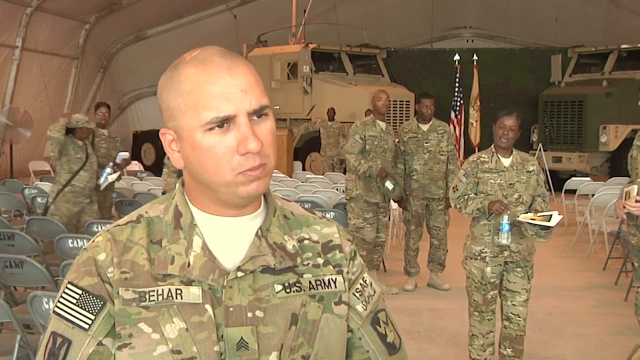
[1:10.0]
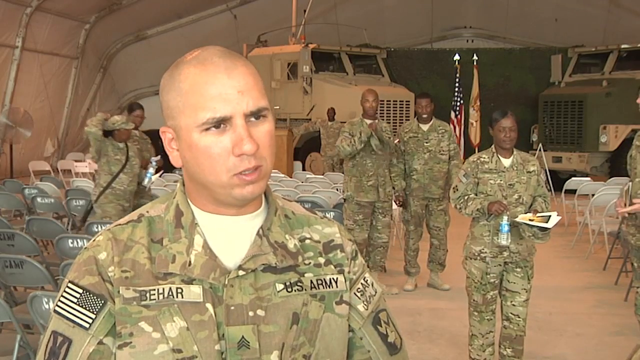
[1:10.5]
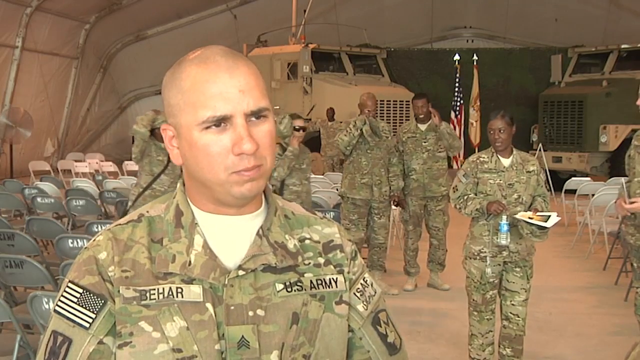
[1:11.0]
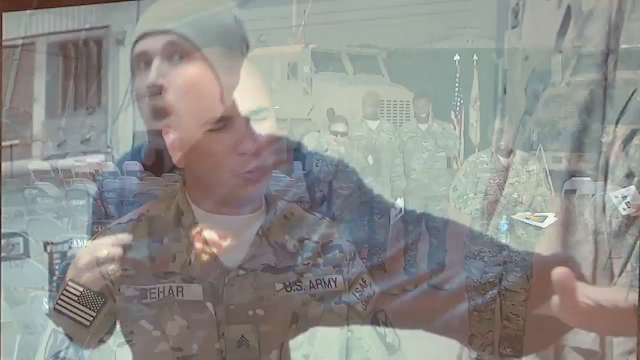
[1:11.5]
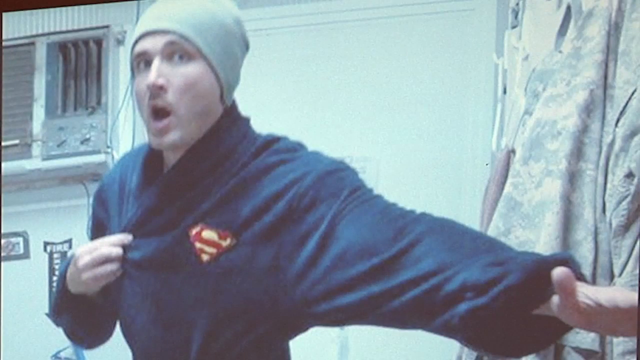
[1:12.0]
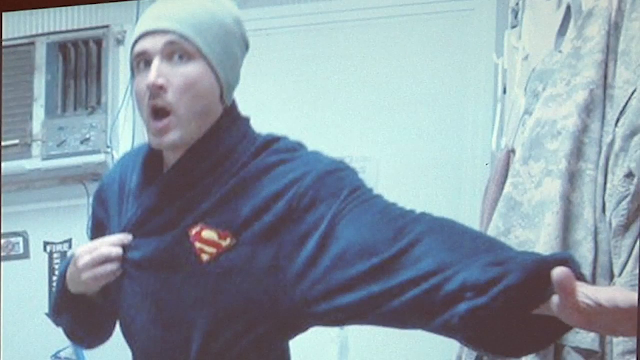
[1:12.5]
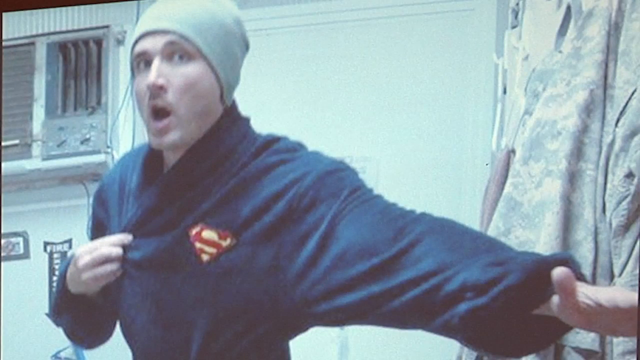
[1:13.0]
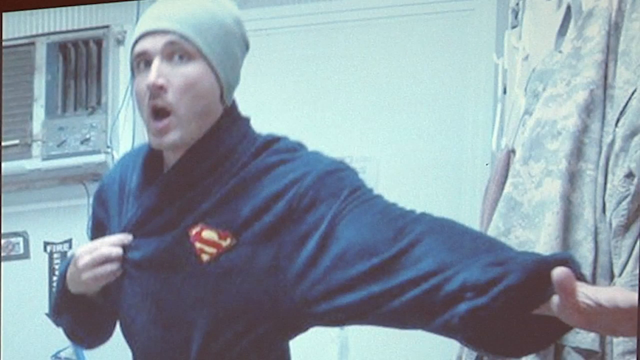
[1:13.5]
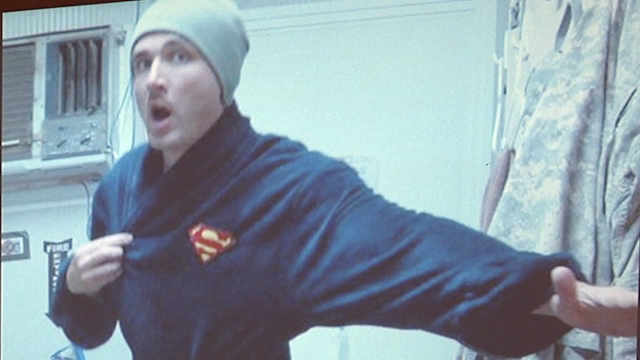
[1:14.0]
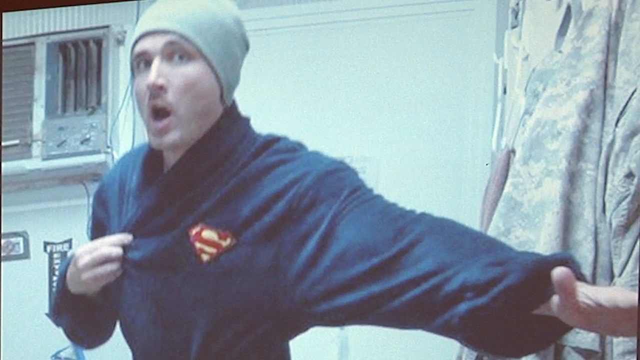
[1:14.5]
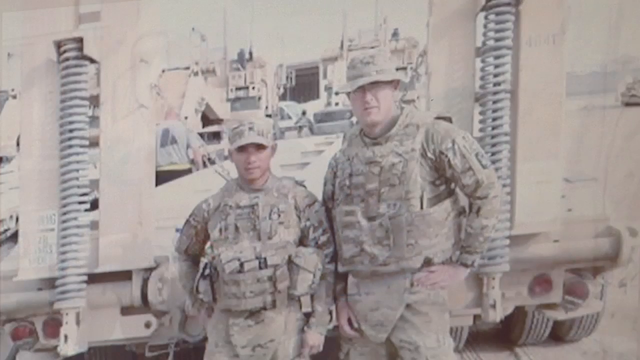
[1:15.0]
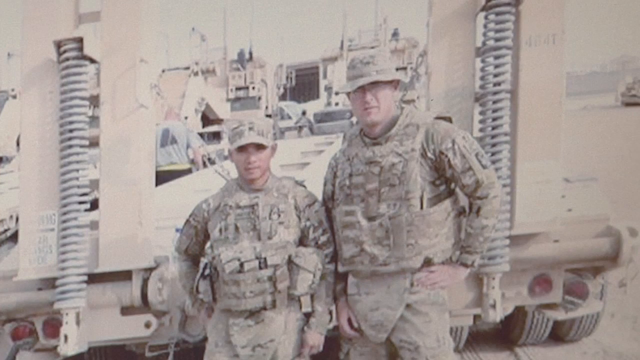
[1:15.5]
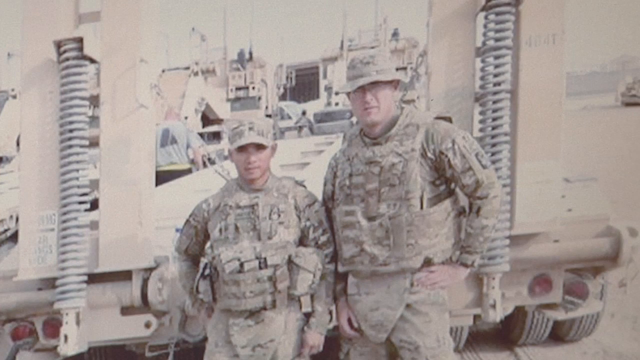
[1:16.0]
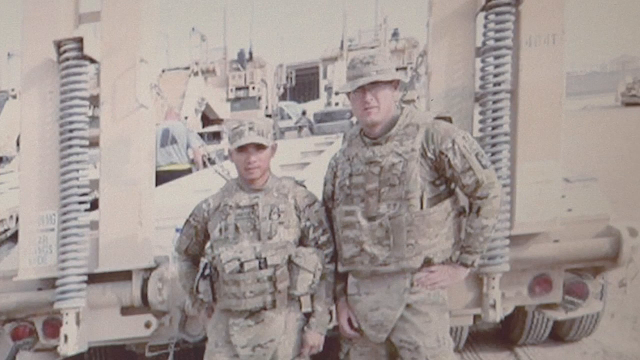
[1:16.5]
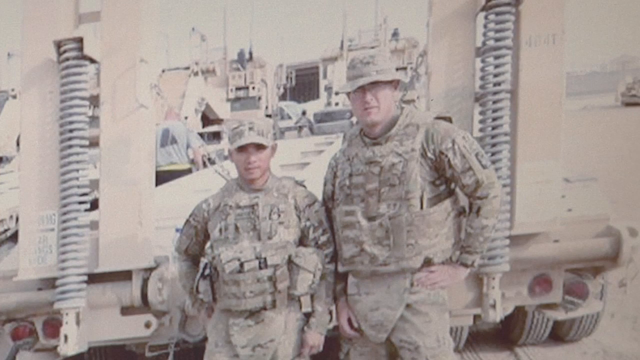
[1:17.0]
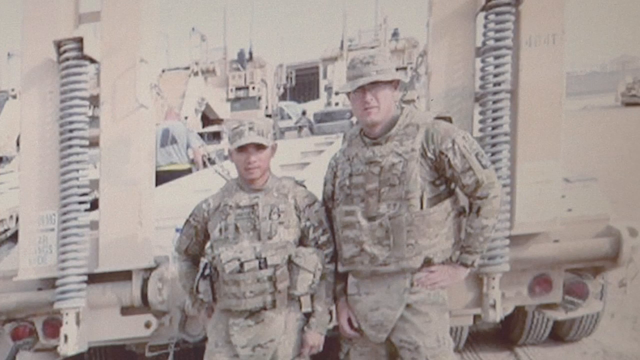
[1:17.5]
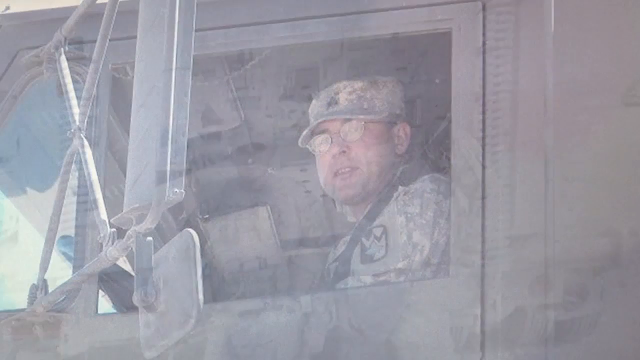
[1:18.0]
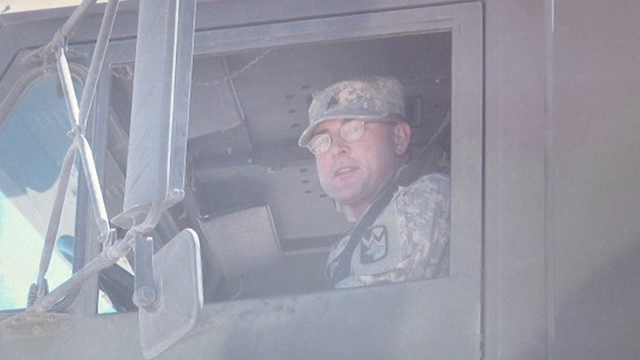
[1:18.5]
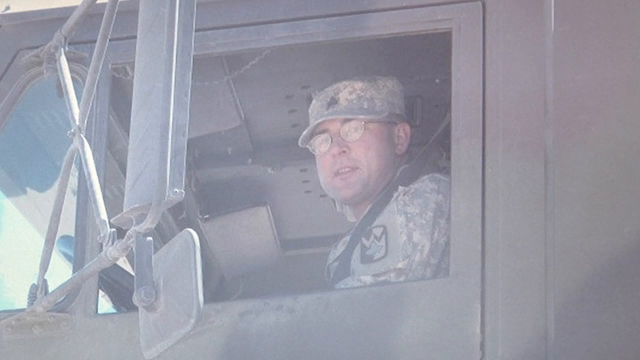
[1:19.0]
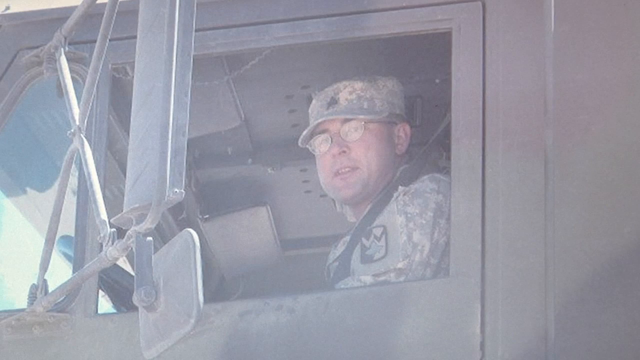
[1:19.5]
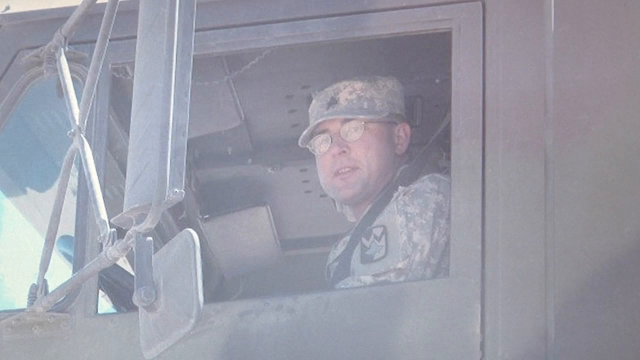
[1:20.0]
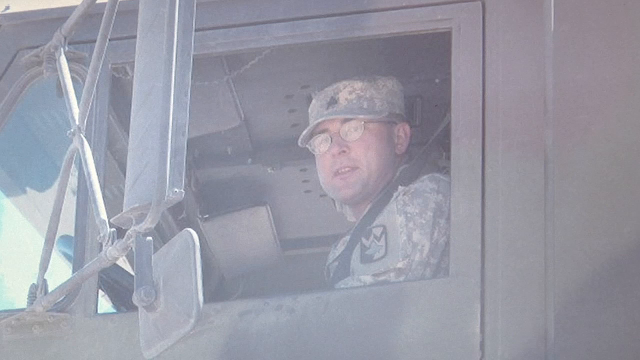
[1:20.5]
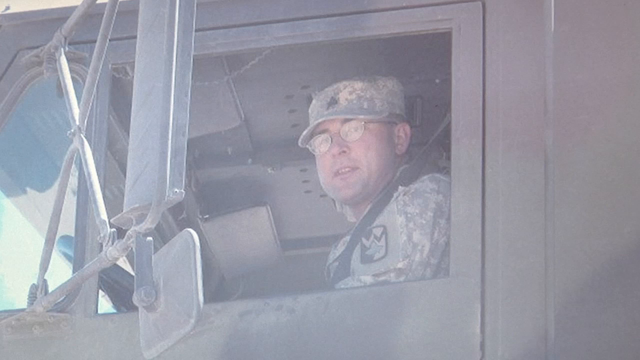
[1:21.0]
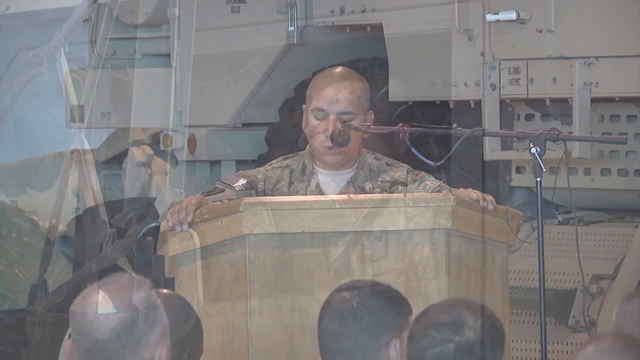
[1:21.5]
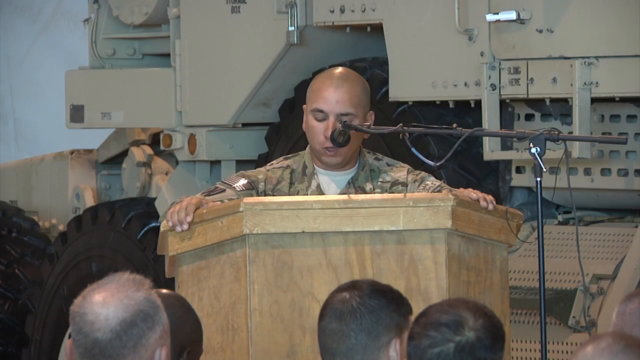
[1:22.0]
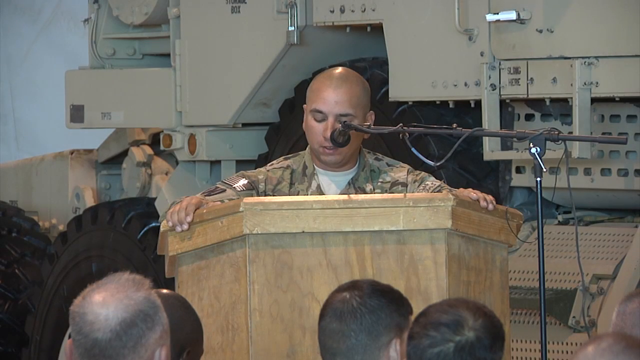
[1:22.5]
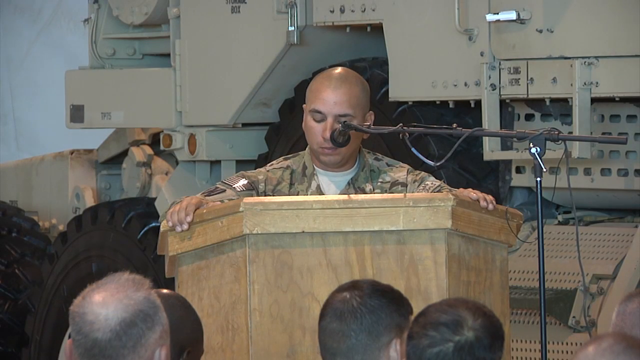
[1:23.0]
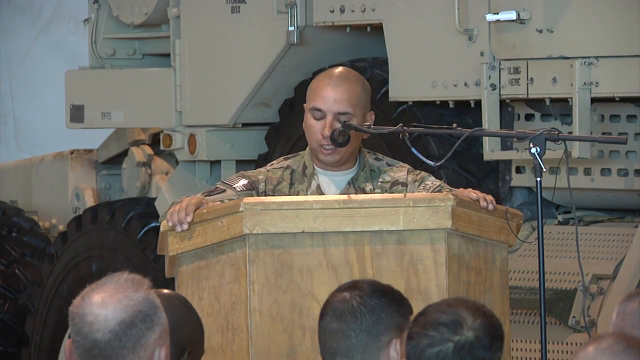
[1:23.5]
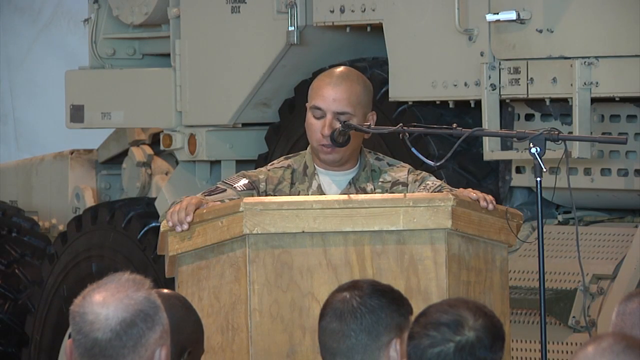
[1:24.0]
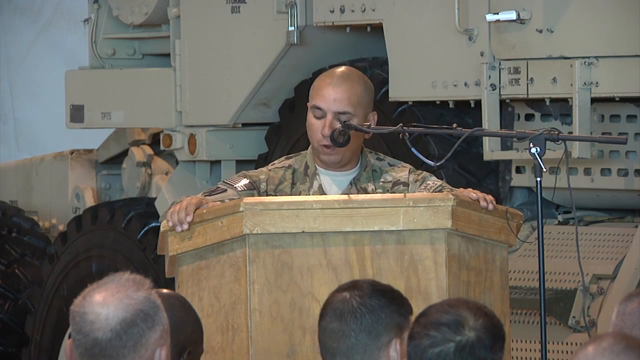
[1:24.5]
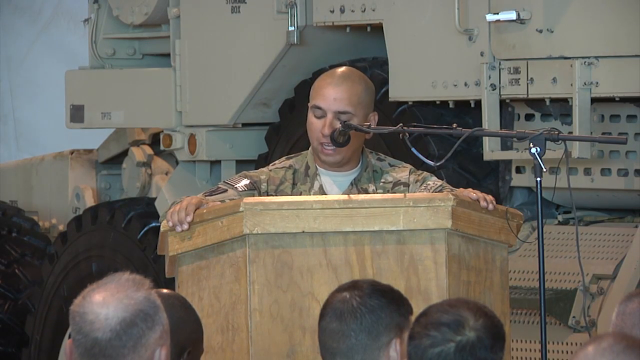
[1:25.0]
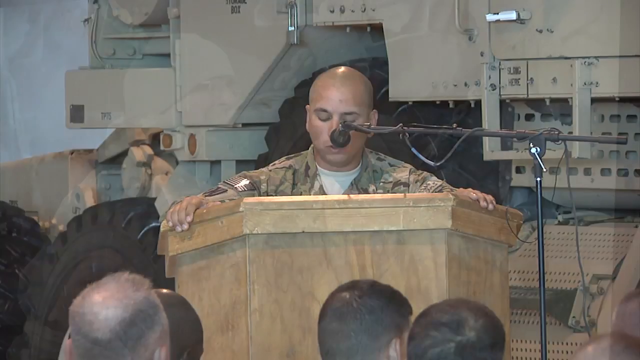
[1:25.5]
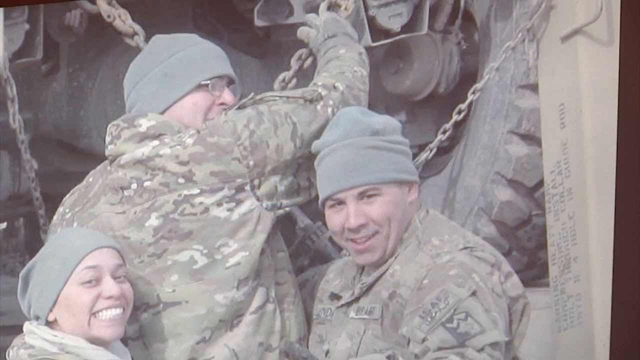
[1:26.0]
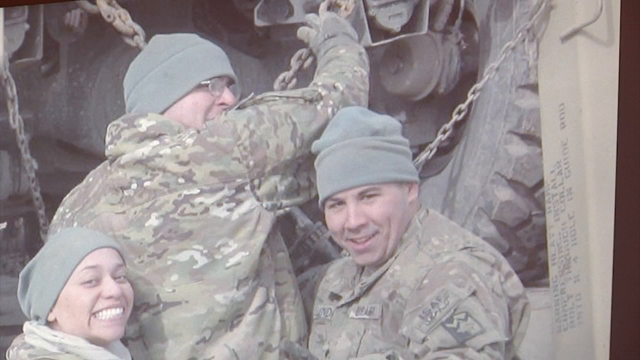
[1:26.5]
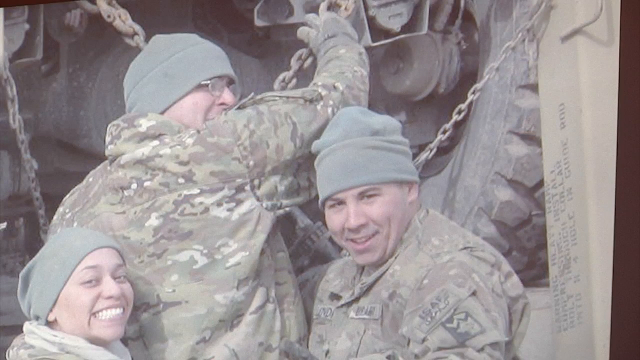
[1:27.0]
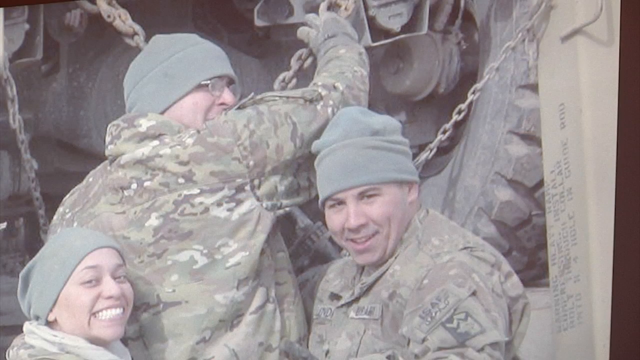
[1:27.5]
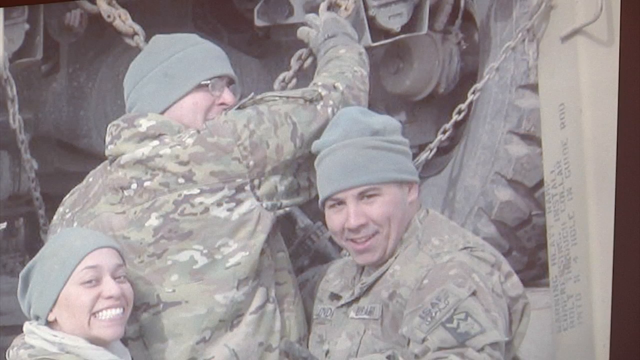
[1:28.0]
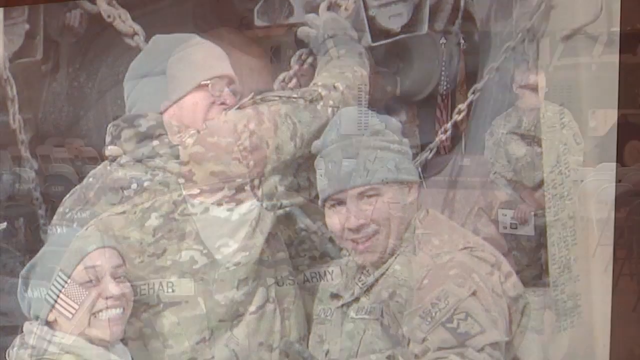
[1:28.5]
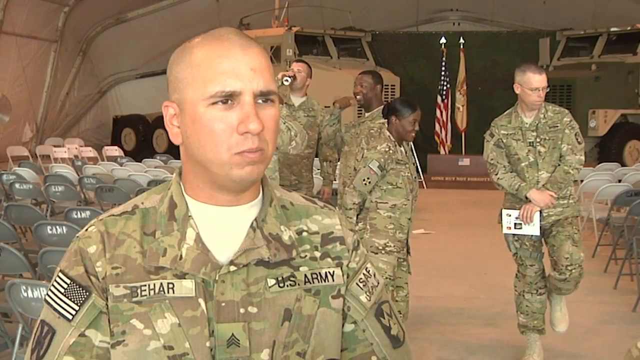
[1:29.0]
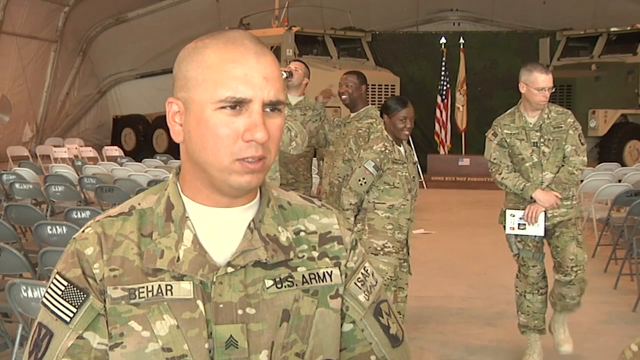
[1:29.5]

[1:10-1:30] A picture shows a white man in a blue jacket with a triangular patch on the left chest, point down, yellow outlined in red with a red S on it, looking like a Superman patch. His mouth is open in a very round shape, and with his right hand he pulls the left part of his jacket over as if to show the patch distinctly; his left arm is extended beside him, palm down, thumb facing forward. Next is a picture of two men, a younger, shorter white man and an older, taller white man, in camouflage uniforms and camouflage hats standing in front of a wall; the whole scene looks almost sepia. Then there is a picture of a white soldier in glasses, camouflage uniform and cap looking out of a military vehicle window. The video returns to the bald white man at the podium with the microphone, speaking and looking down at the surface of the podium. Next is a picture of three people in camouflage garb and knit hats. On the left, only the face of a white woman is visible; she is standing in front of a man with his back to the camera, his right arm lifted and extended a little forward, resting on what looks like the giant tire of a military vehicle. His face is visible in profile and he has glasses on. To his right is an older white man, and everybody is smiling. Then the bald white man is shown talking to the camera with a number of military people in camouflage uniforms behind him, and in the far back a couple of flags: an American flag on the left and a kind of tan and orangish flag on the right.